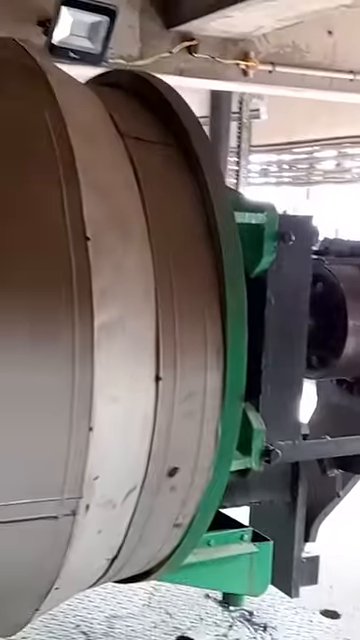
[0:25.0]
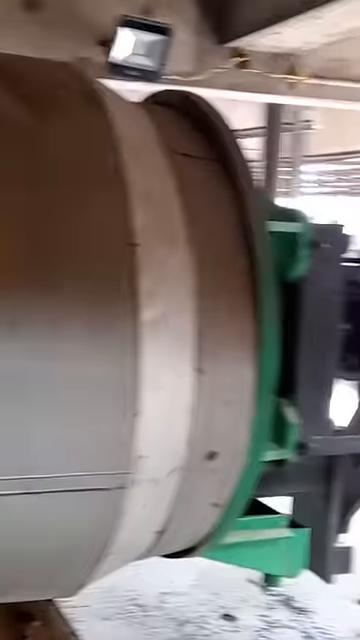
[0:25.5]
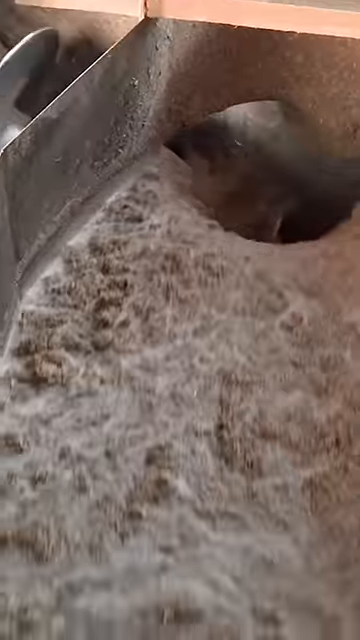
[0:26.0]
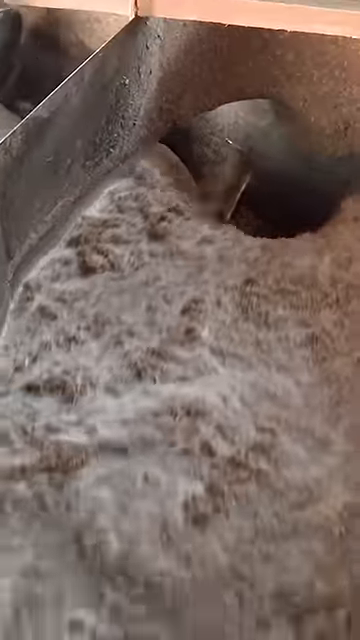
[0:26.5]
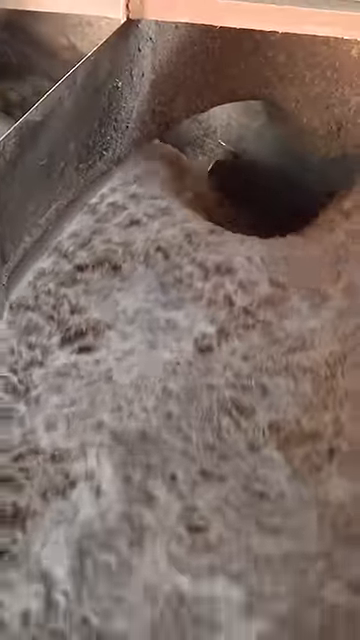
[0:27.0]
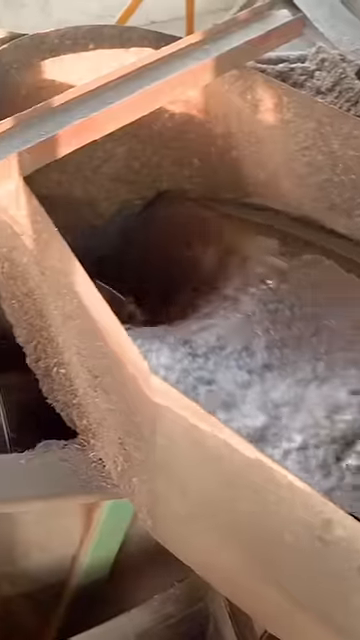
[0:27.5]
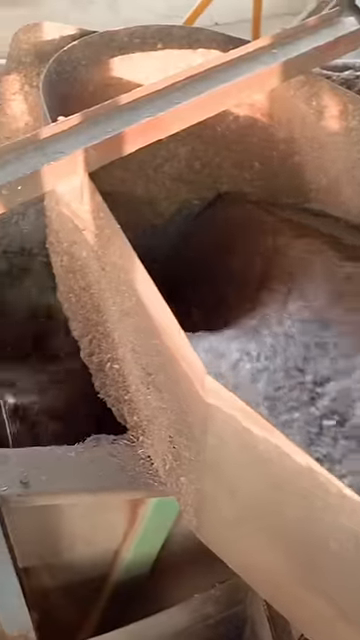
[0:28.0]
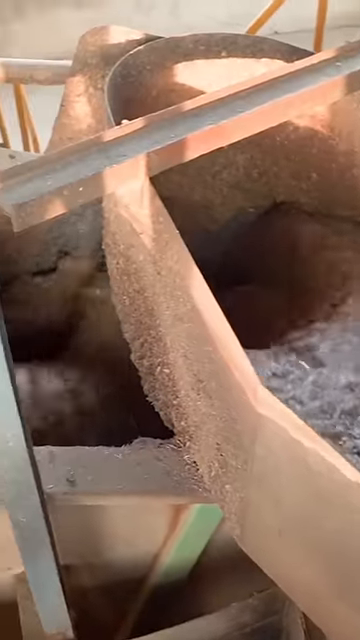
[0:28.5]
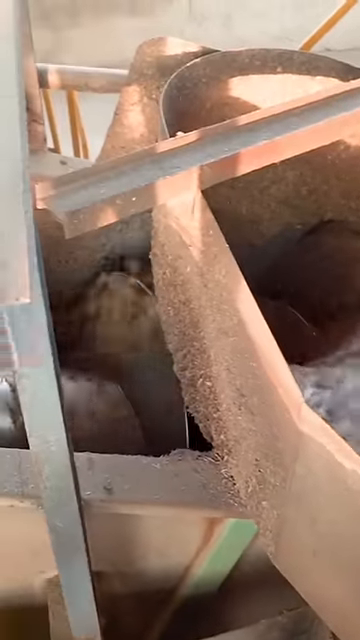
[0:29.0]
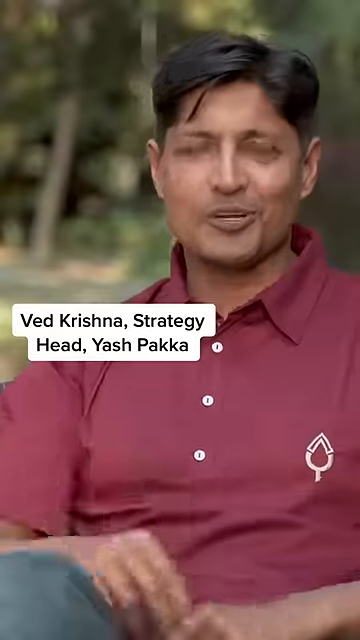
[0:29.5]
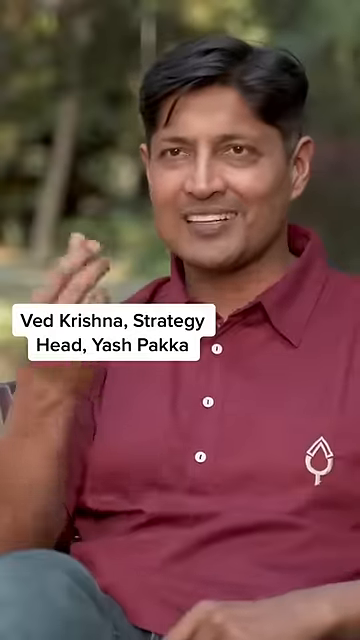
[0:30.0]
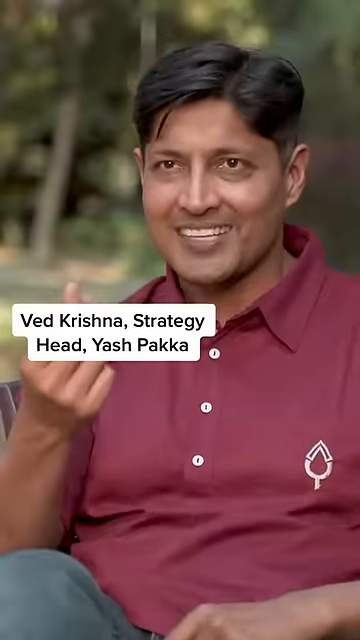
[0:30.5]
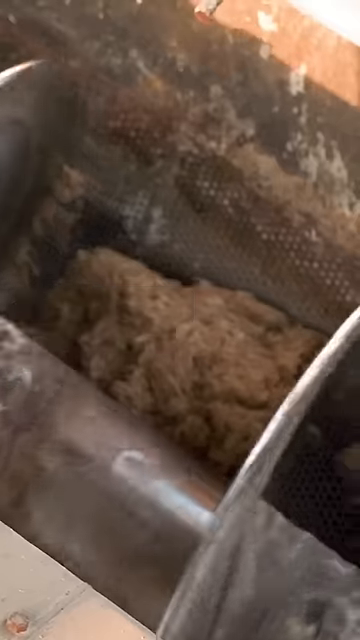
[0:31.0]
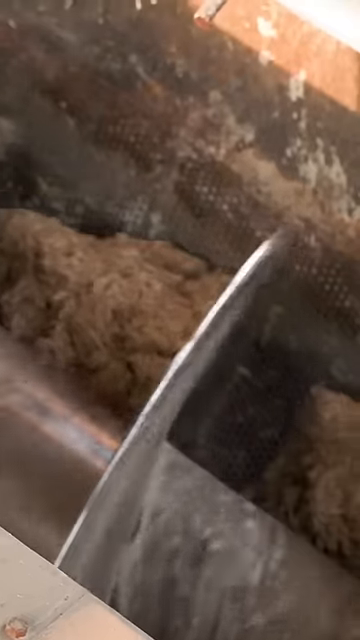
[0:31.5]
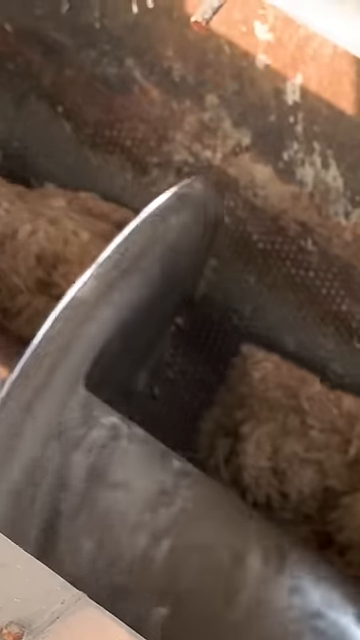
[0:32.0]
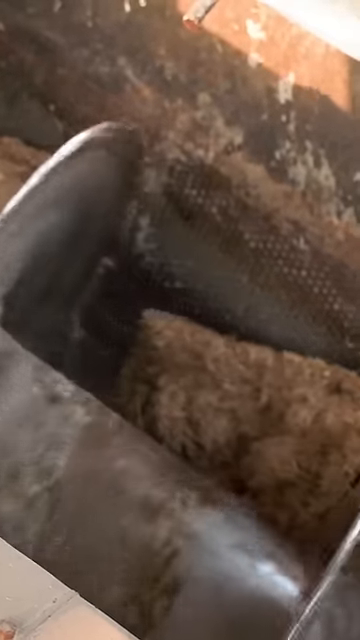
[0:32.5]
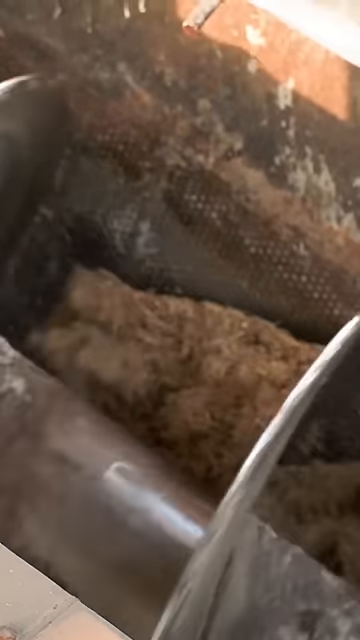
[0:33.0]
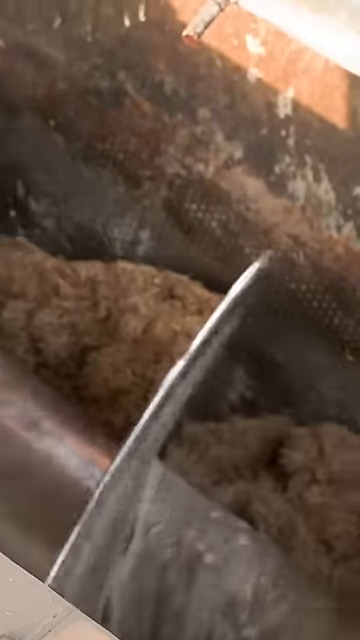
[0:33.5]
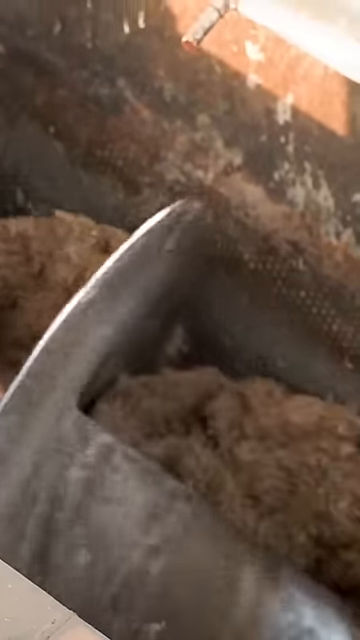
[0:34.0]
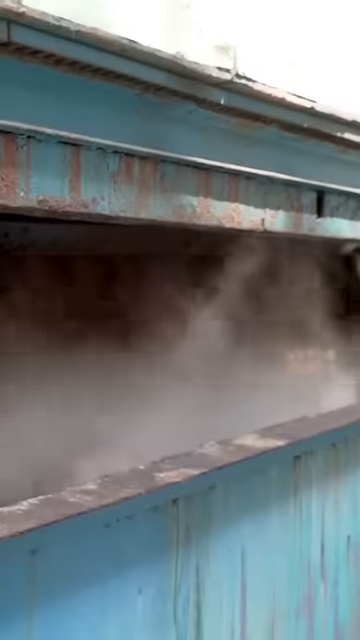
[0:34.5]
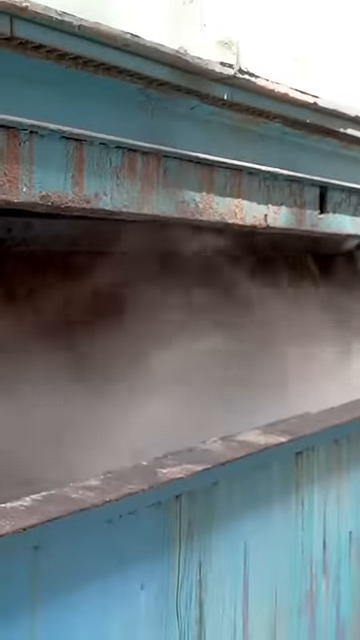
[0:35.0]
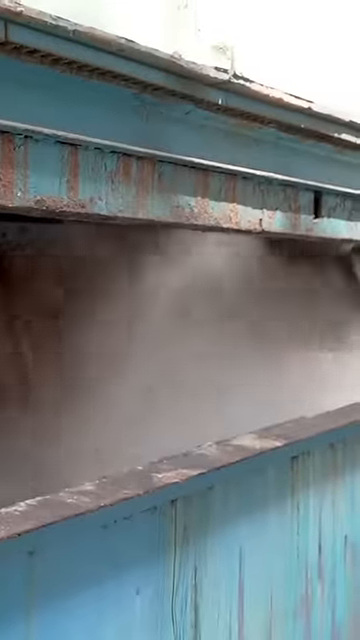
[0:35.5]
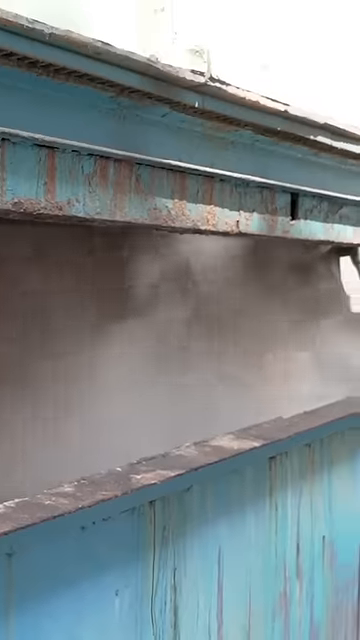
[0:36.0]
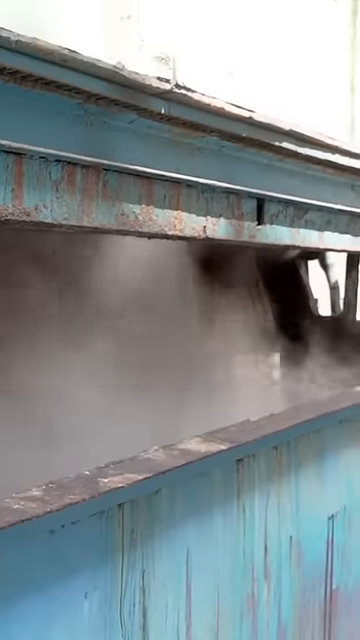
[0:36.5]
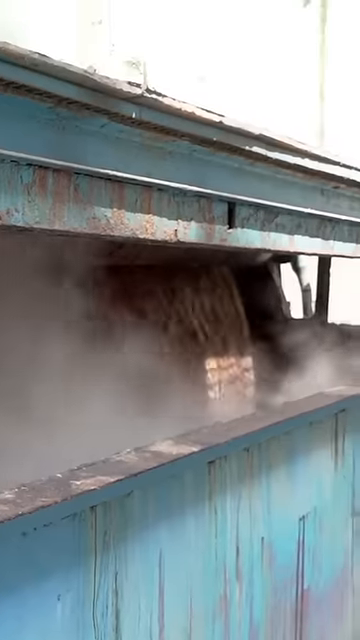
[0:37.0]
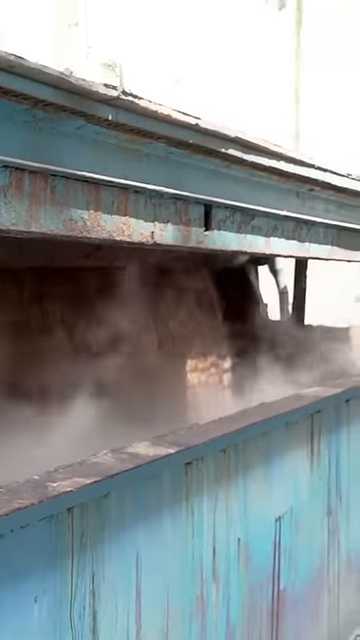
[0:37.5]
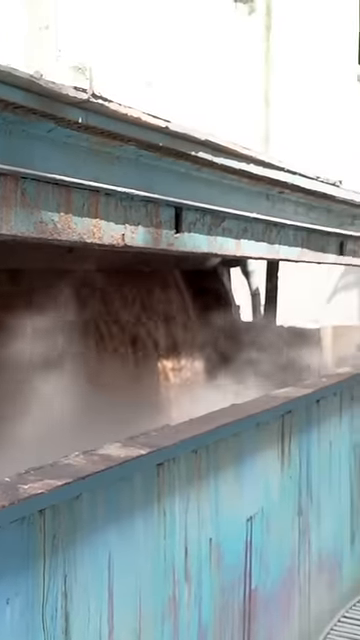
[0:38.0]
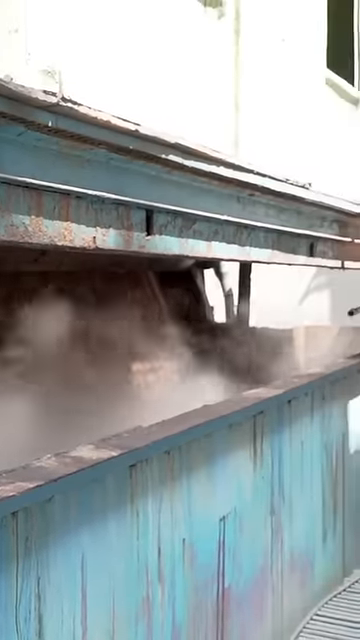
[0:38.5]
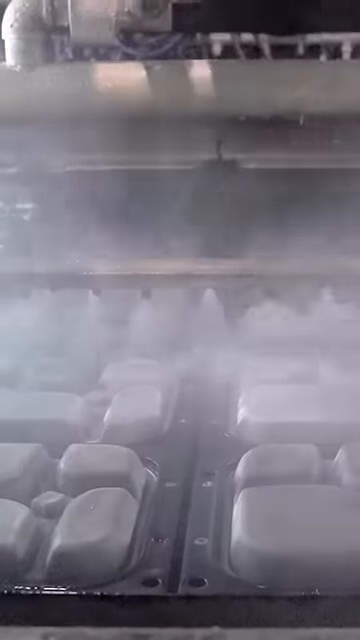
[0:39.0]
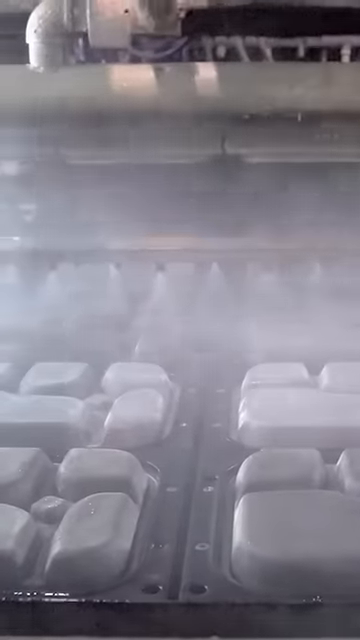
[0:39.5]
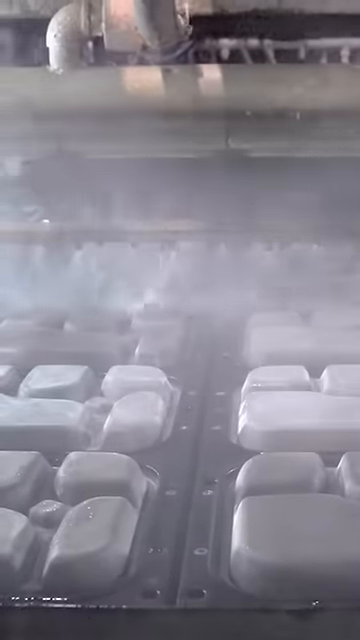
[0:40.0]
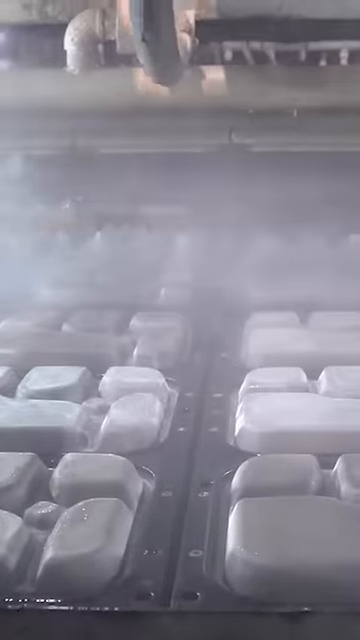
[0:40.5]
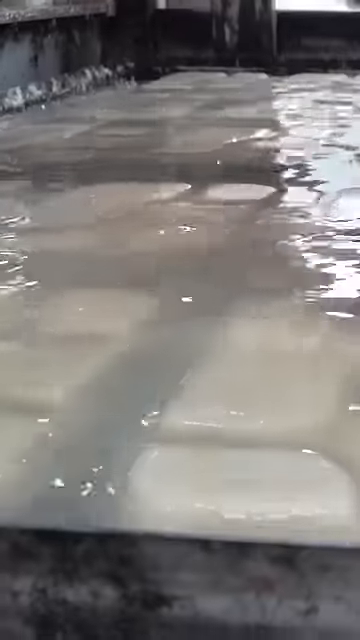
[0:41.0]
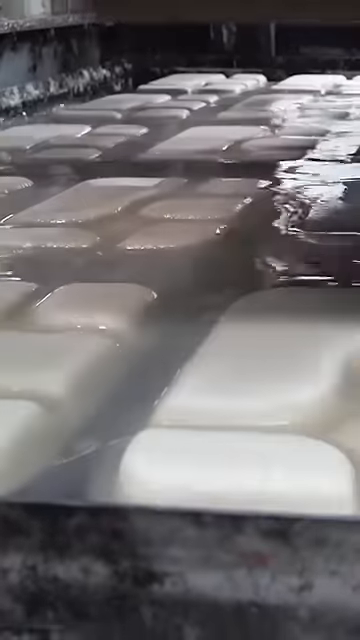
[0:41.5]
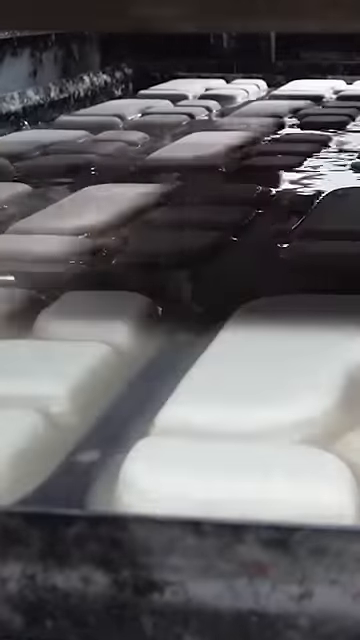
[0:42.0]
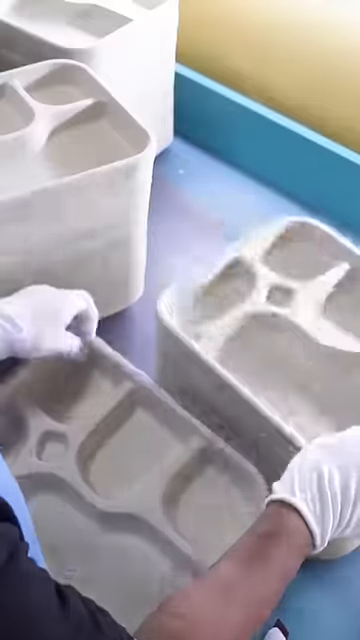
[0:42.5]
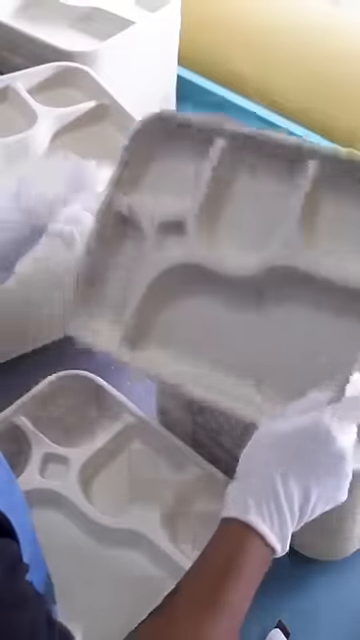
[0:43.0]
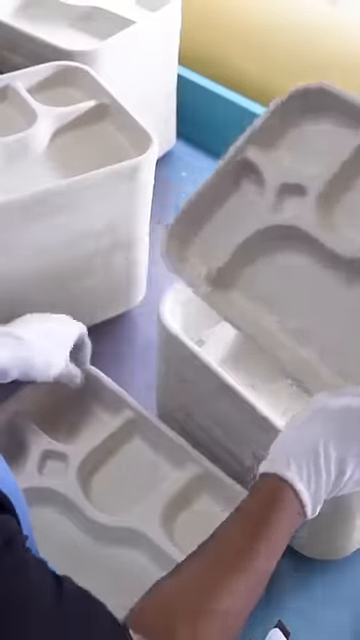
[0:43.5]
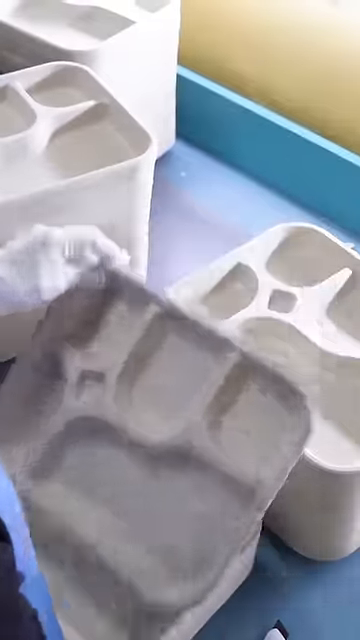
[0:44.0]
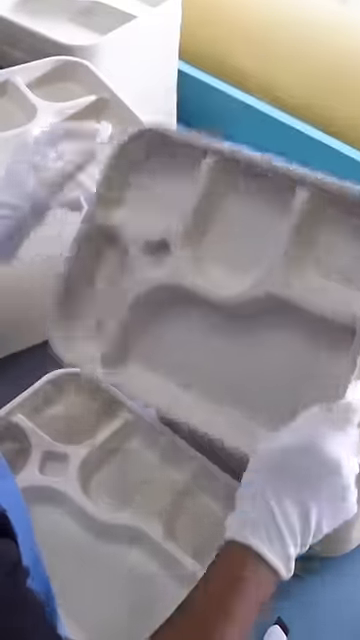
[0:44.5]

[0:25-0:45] The processed sugar cane goes through multiple machines to be cleaned and molded. Sugar cane slurry is transported in chunks to molds where it can be turned into disposable trays. A man in a red polo briefly appears on screen, speaking. A worker with gloved hands holds up the trays made from sugar cane, inspecting them before putting them in a pile.